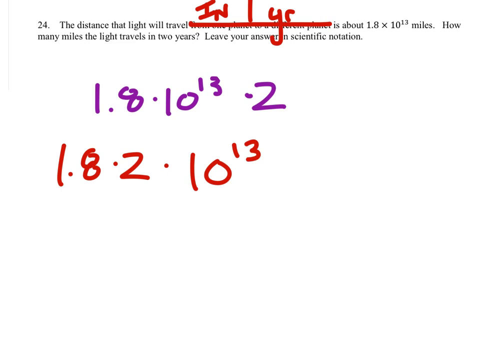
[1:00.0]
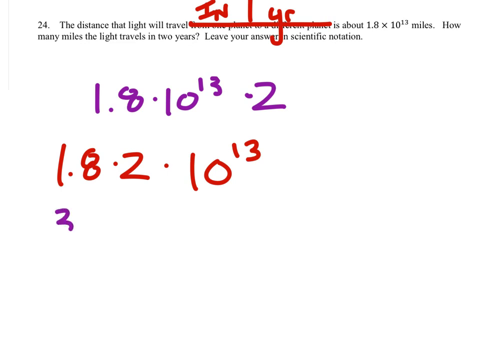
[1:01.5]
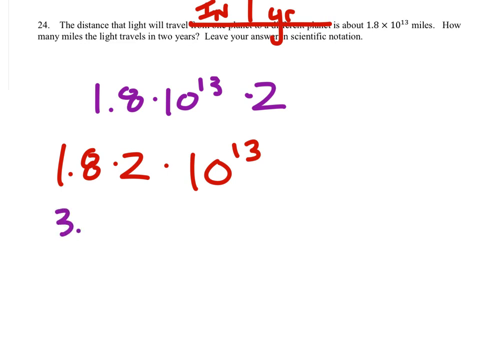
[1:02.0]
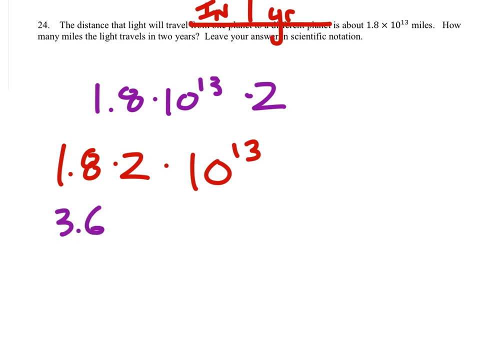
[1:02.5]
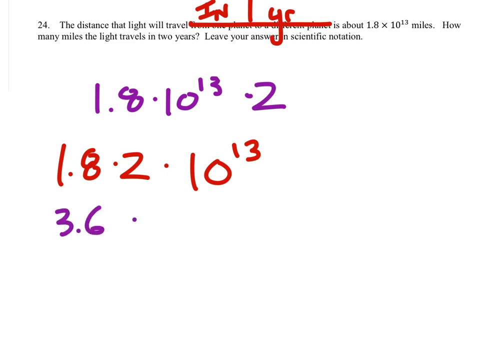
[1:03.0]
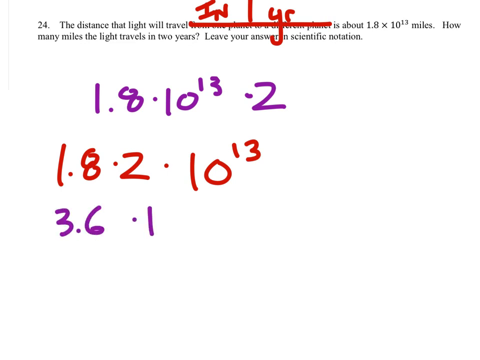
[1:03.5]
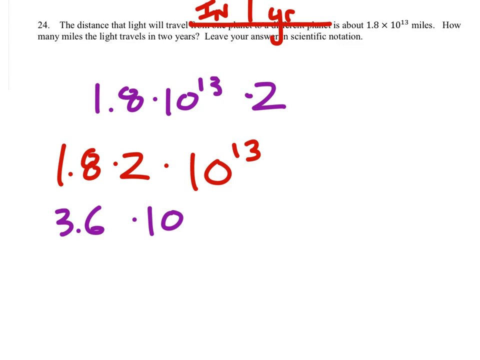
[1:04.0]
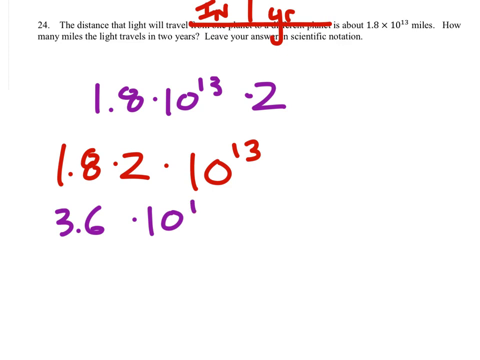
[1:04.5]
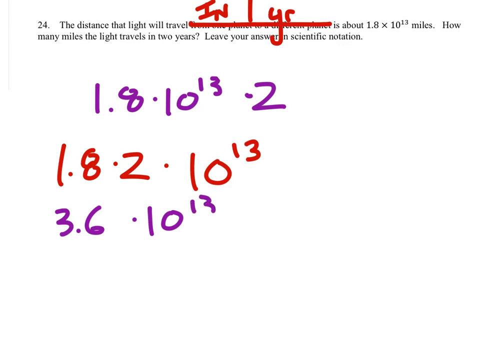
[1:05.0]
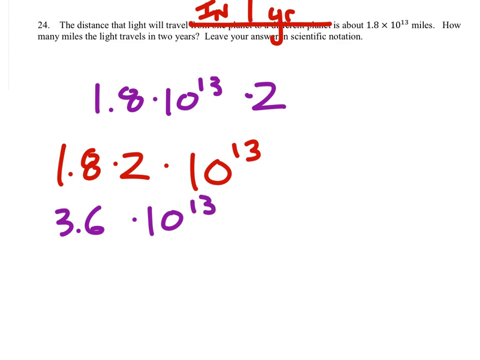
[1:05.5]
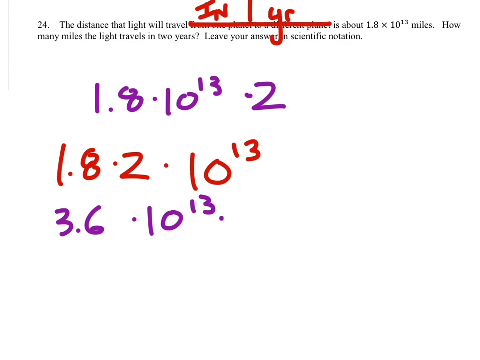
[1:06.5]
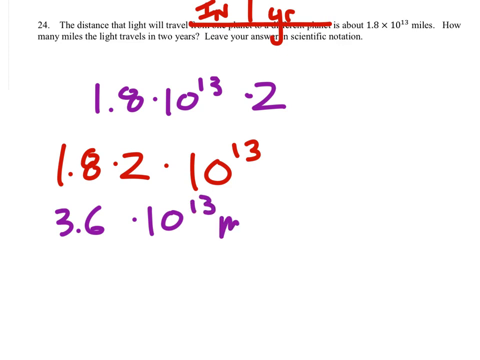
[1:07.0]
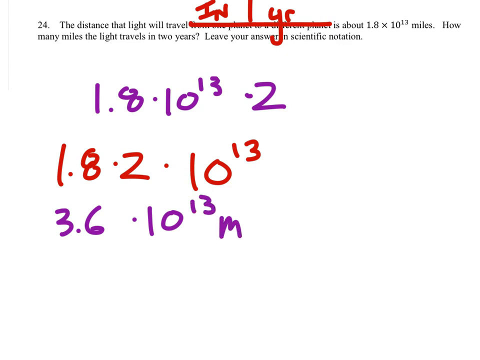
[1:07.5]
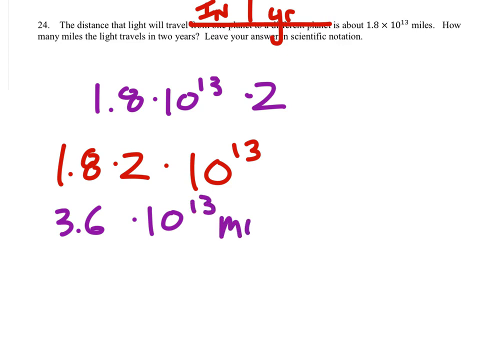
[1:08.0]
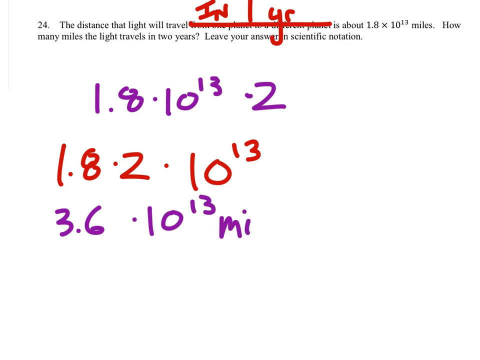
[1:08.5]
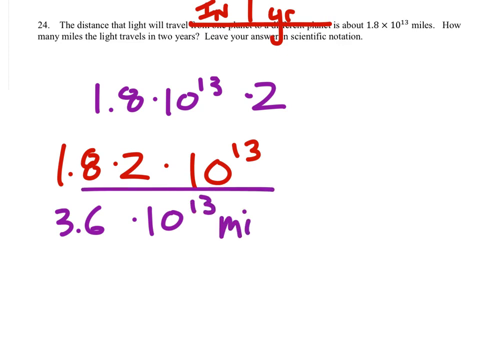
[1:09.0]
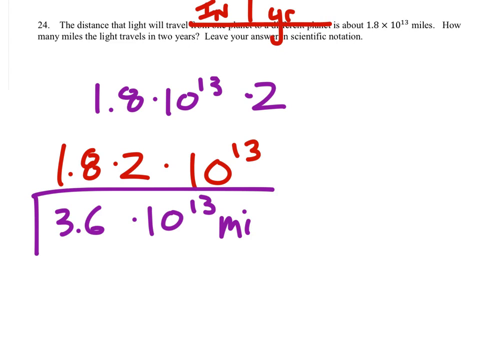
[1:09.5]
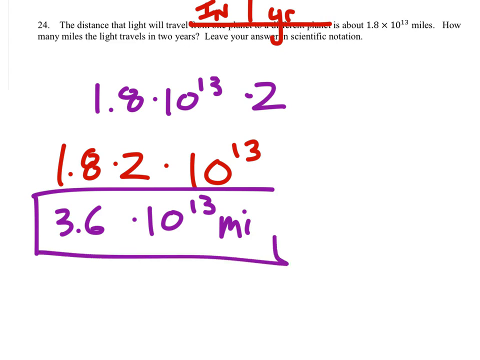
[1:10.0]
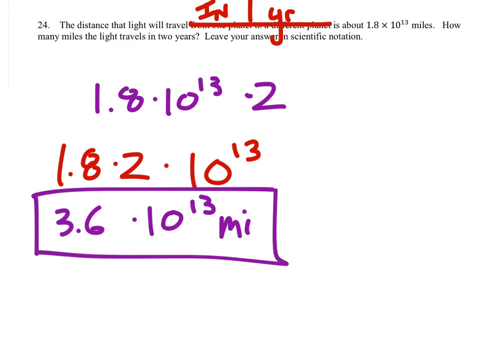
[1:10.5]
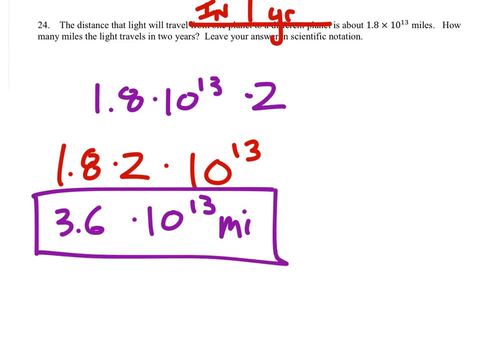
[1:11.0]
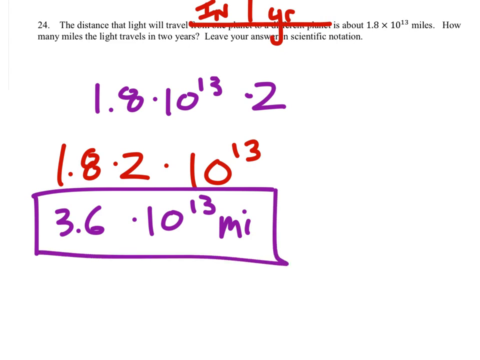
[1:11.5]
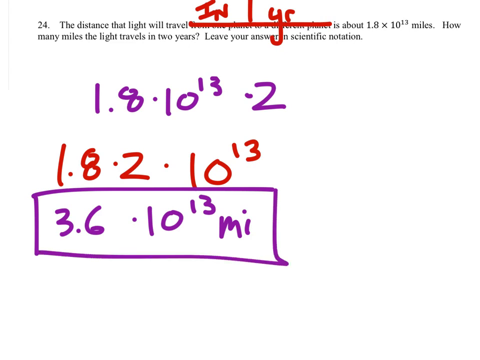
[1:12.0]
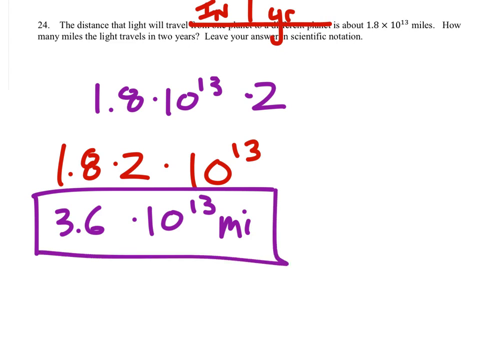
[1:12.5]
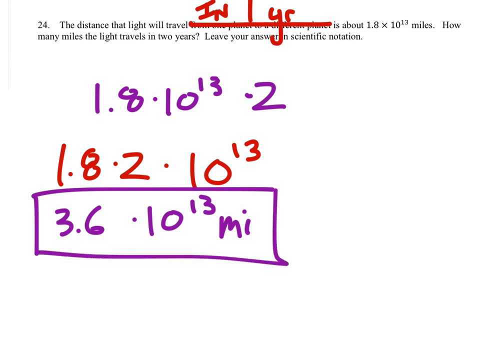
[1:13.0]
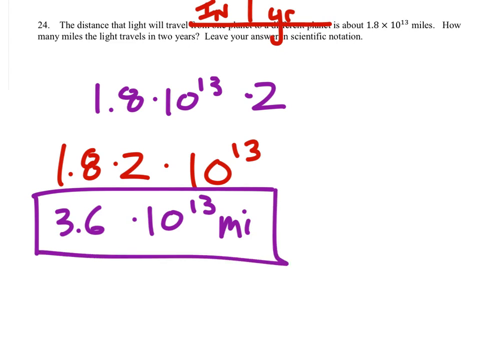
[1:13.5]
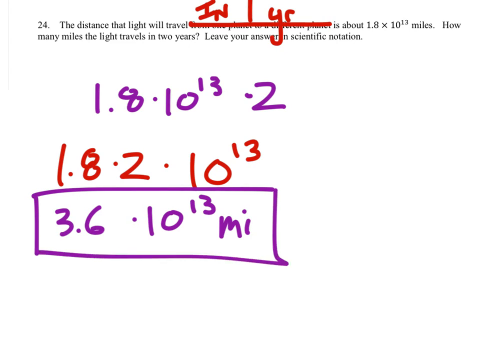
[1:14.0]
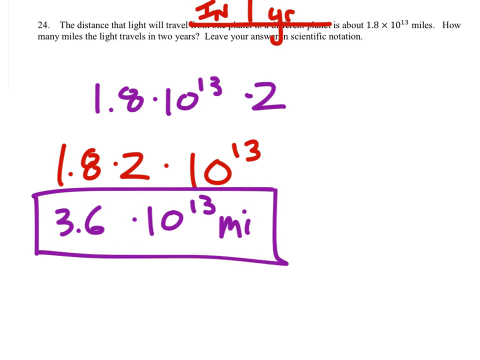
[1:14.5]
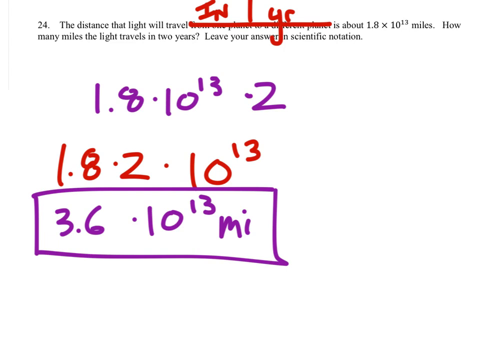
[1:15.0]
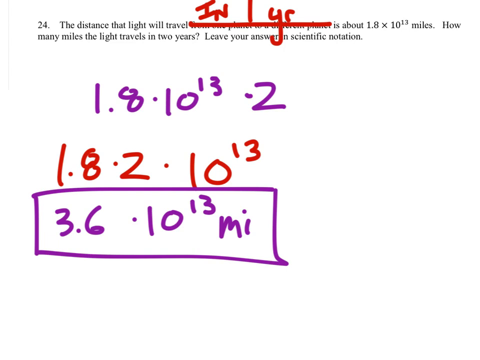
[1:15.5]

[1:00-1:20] The expression 1.8 times 10 to the 13th power multiplied by 2 is rewritten on the line below as 1.8 multiplied by 2 multiplied by 10 to the 13th power. Multiplying 1.8 by 2 changes it to 3.6, while the 10 to the 13th power stays the same.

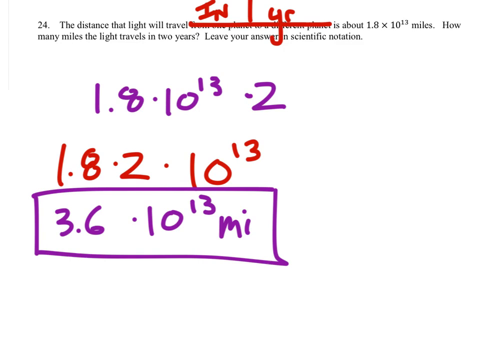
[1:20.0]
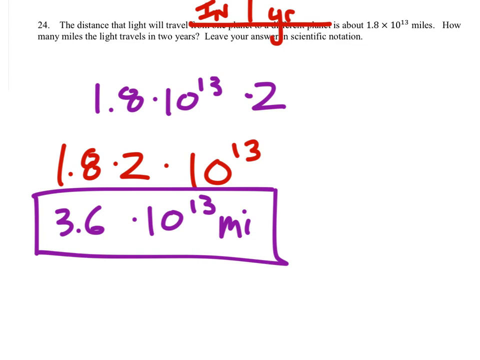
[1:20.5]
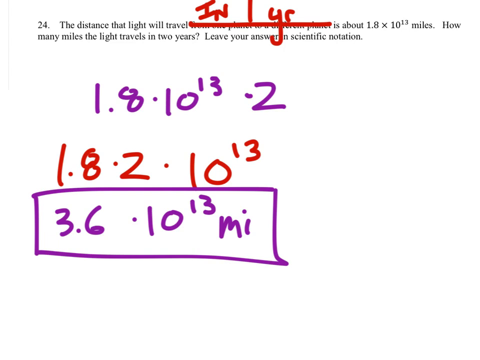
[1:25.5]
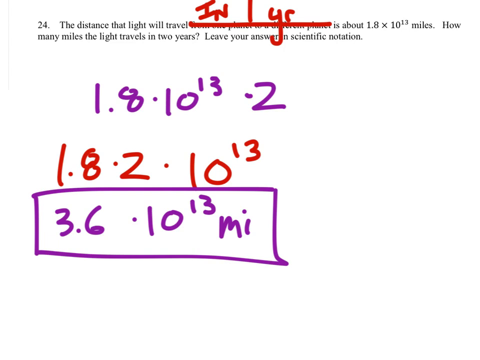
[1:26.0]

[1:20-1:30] The result is rewritten below as the answer: 3.6 multiplied by 10 to the 13th power, followed by "mi" for miles.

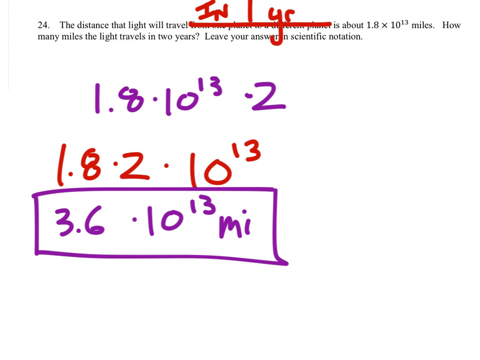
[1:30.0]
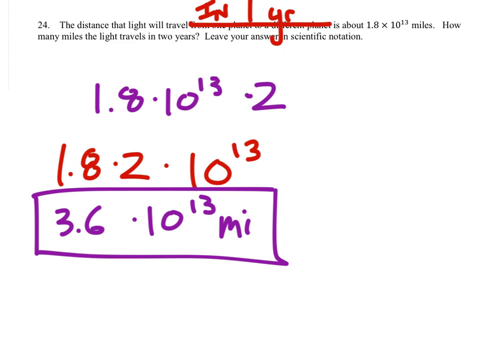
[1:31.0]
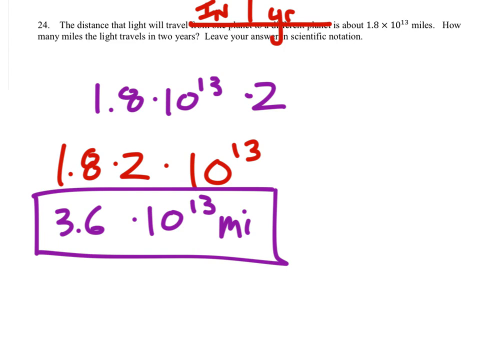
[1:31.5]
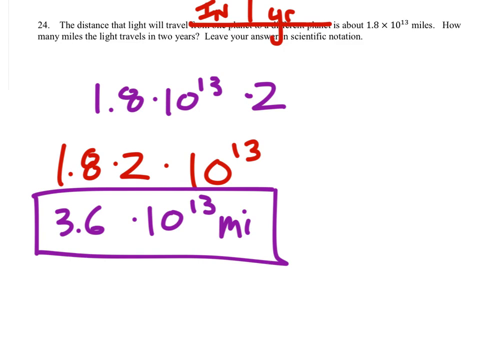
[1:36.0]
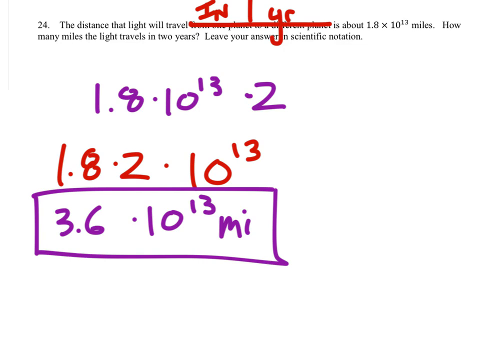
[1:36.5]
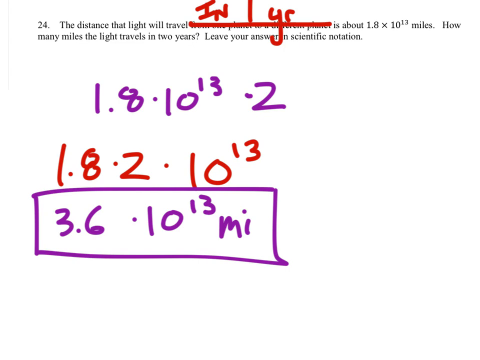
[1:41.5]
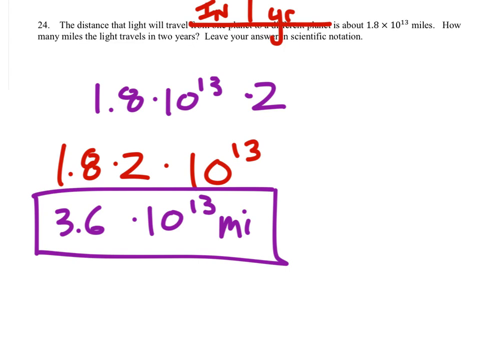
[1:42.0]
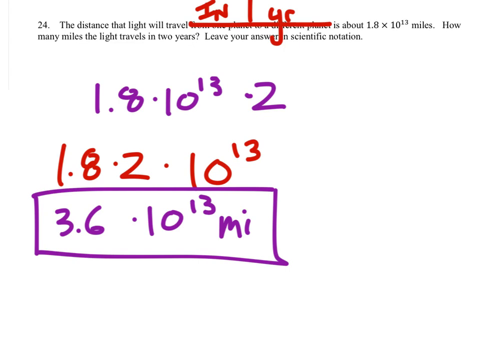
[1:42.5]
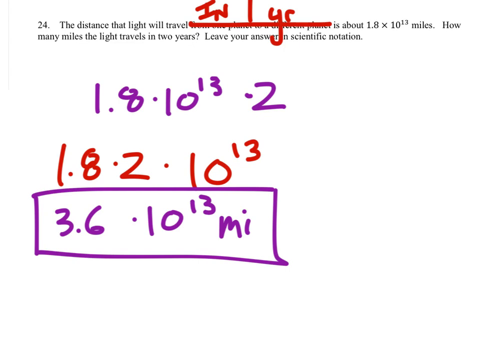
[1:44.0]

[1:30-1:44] The answer, 3.6 times 10 to the 13th power miles, denoted by "mi", has a rectangle drawn around it to mark it as the answer.